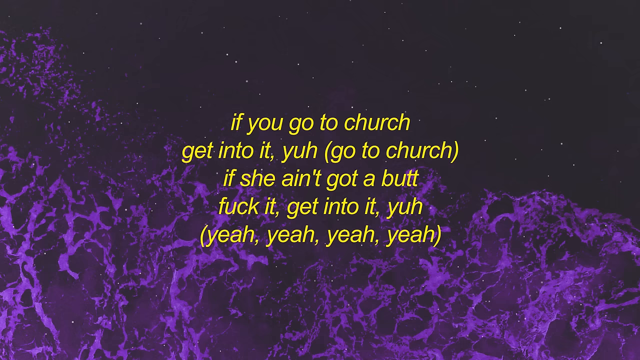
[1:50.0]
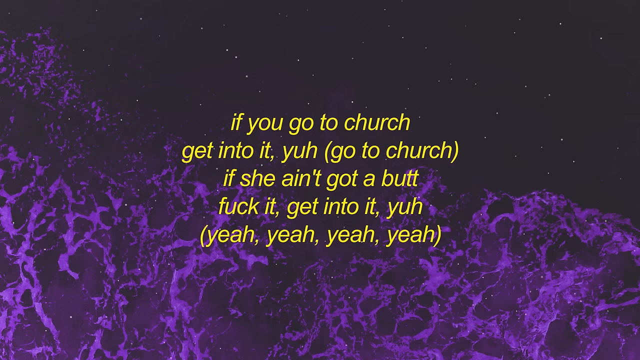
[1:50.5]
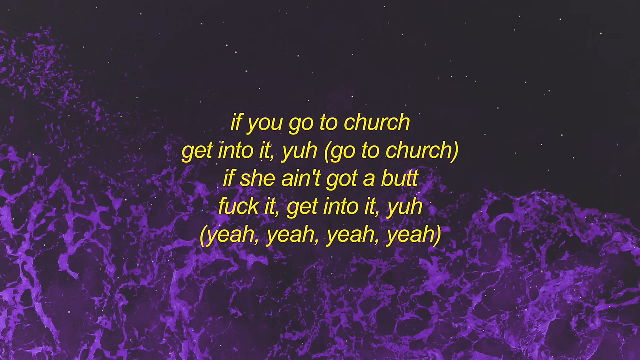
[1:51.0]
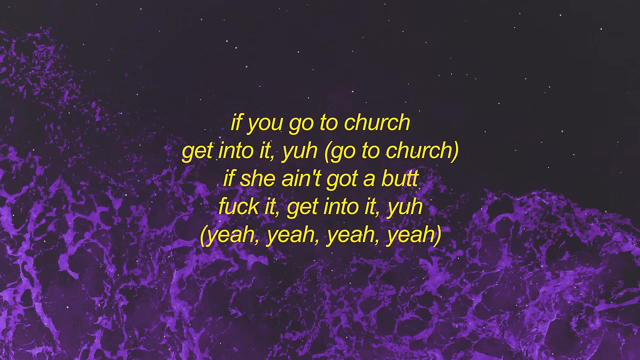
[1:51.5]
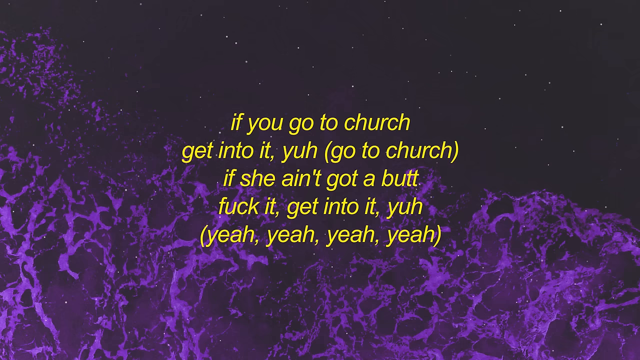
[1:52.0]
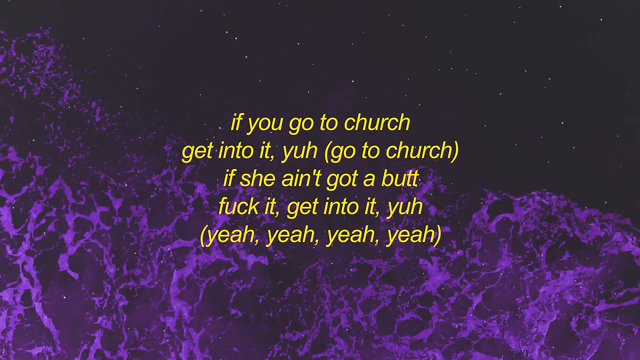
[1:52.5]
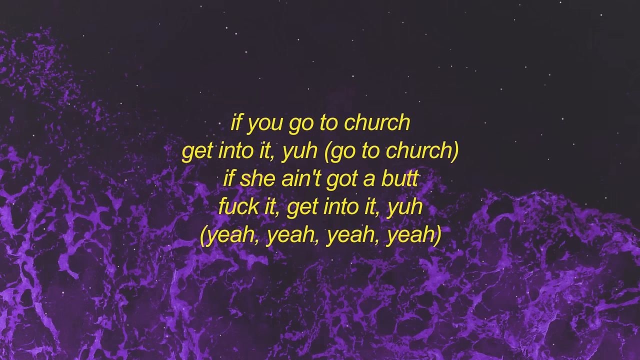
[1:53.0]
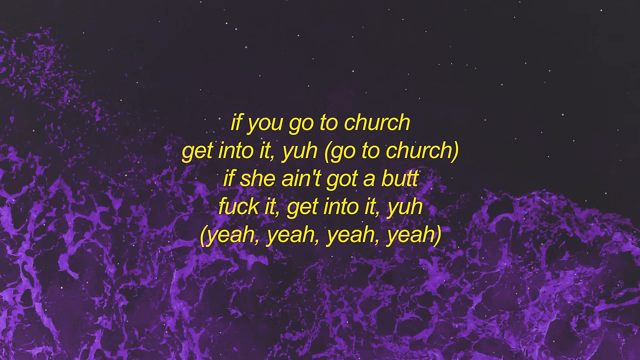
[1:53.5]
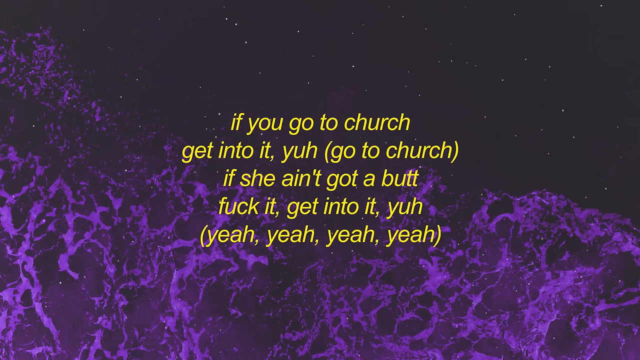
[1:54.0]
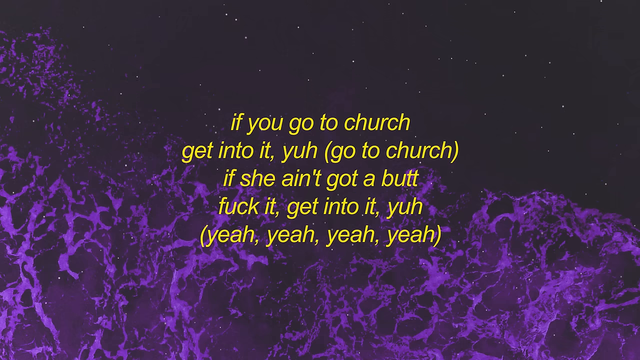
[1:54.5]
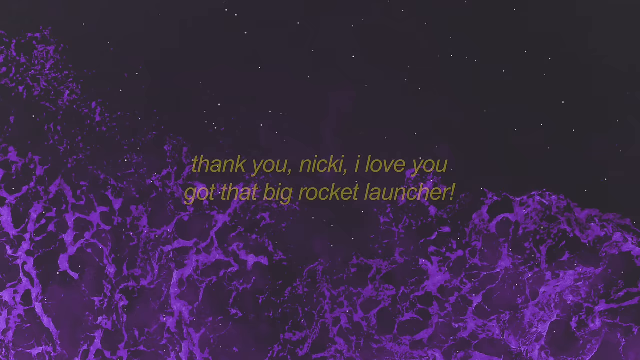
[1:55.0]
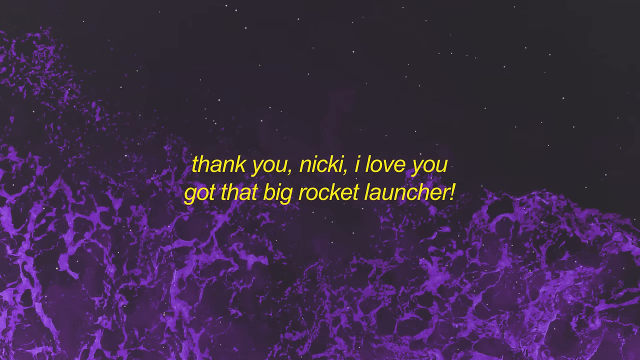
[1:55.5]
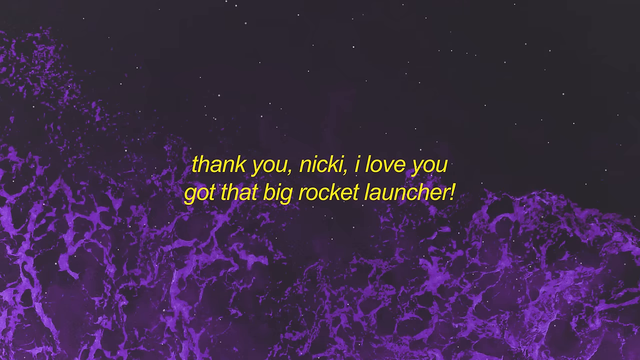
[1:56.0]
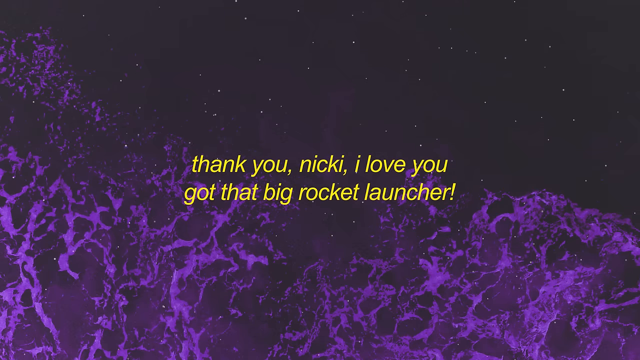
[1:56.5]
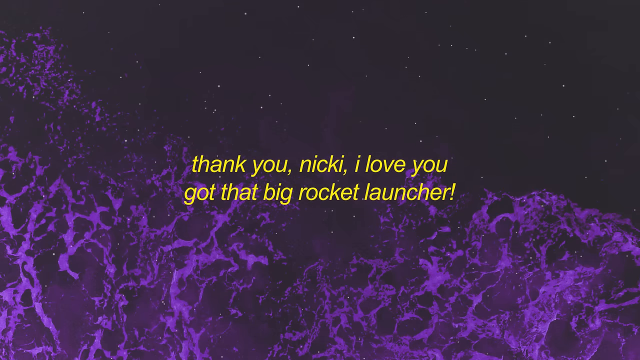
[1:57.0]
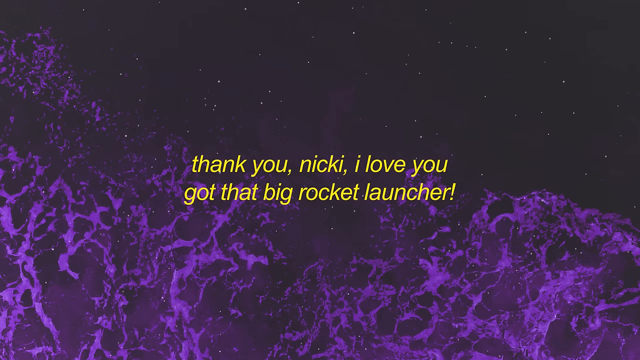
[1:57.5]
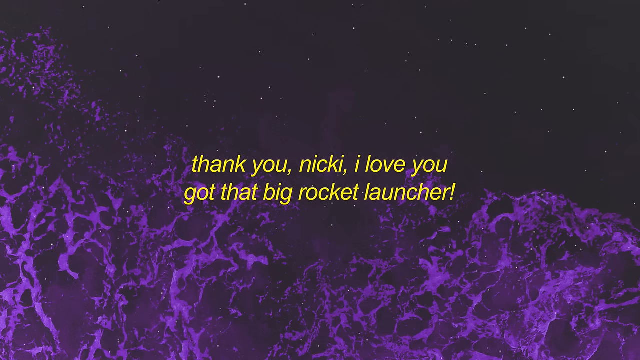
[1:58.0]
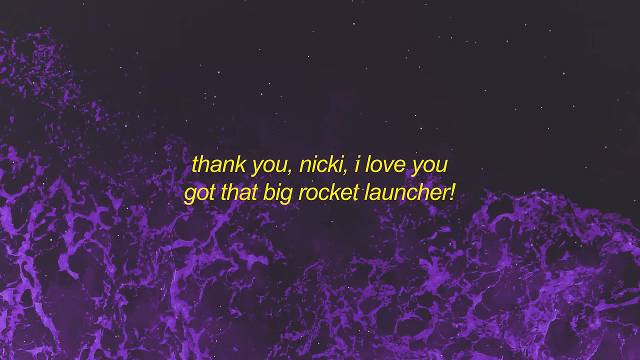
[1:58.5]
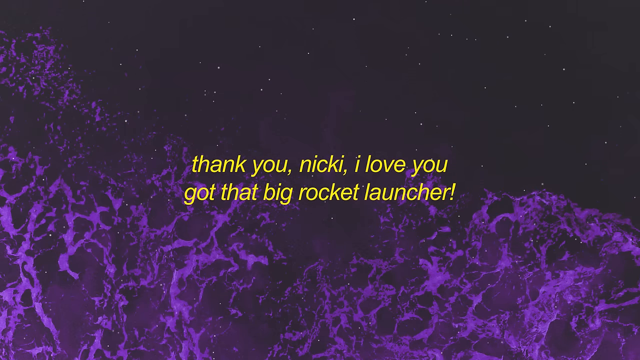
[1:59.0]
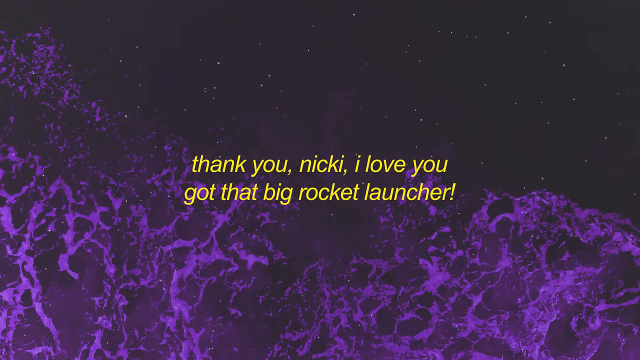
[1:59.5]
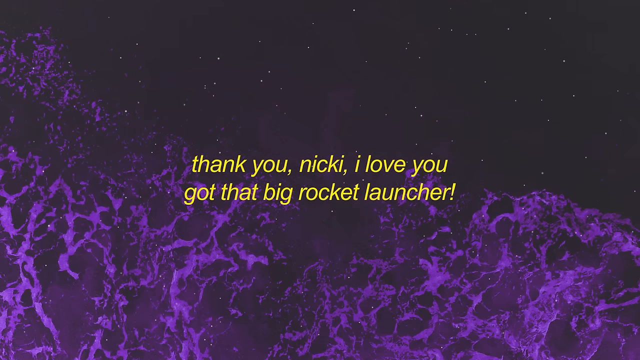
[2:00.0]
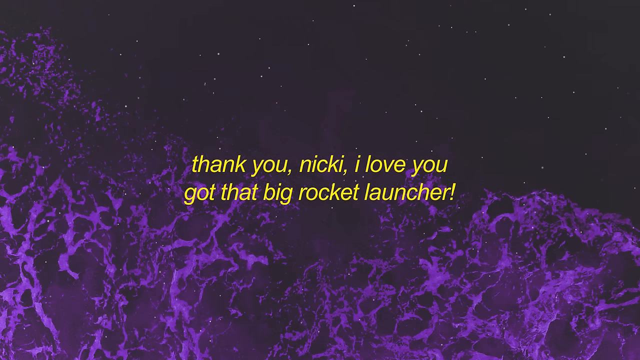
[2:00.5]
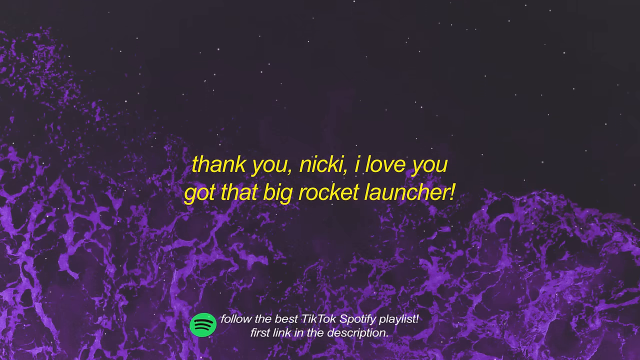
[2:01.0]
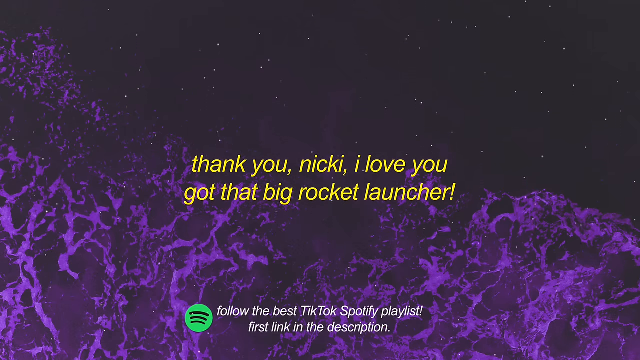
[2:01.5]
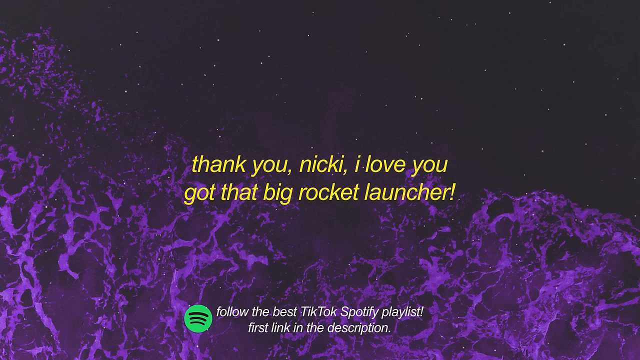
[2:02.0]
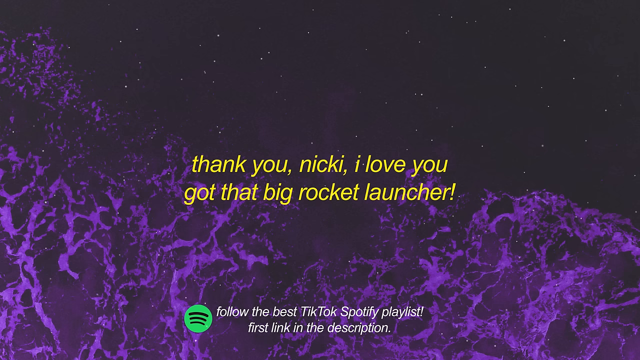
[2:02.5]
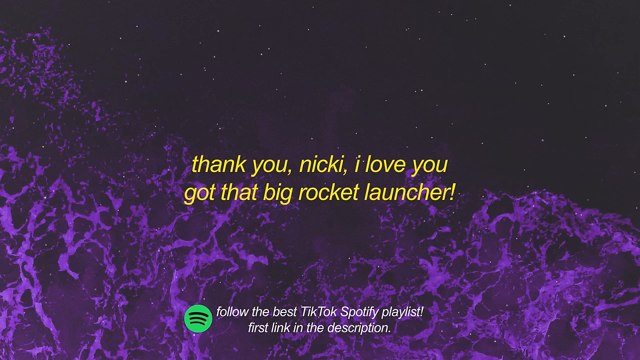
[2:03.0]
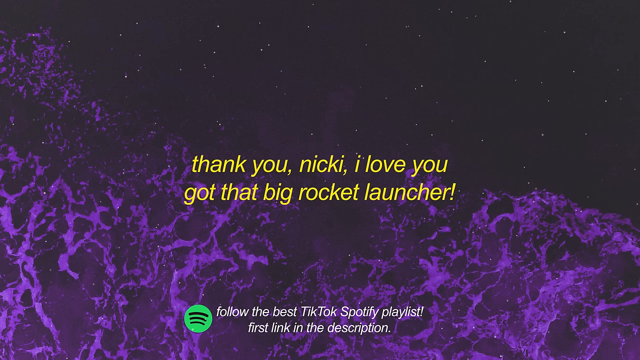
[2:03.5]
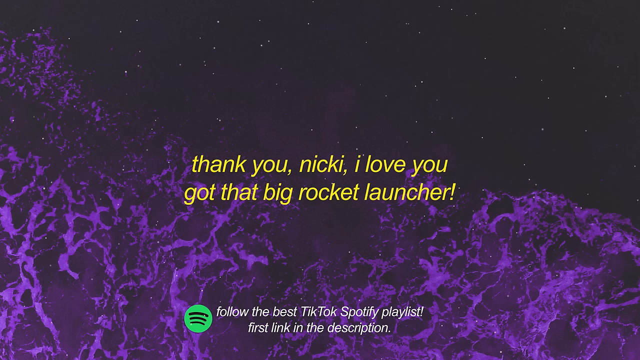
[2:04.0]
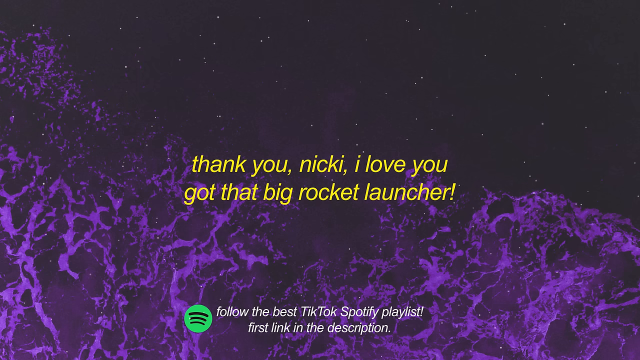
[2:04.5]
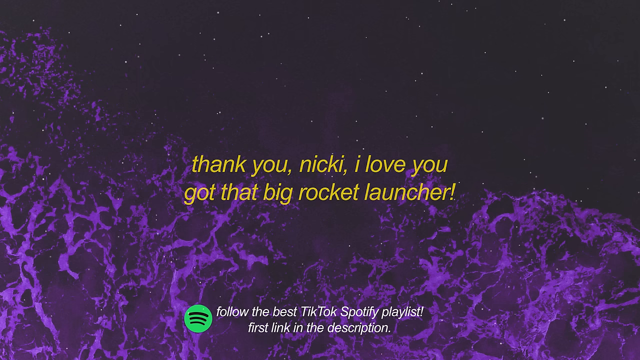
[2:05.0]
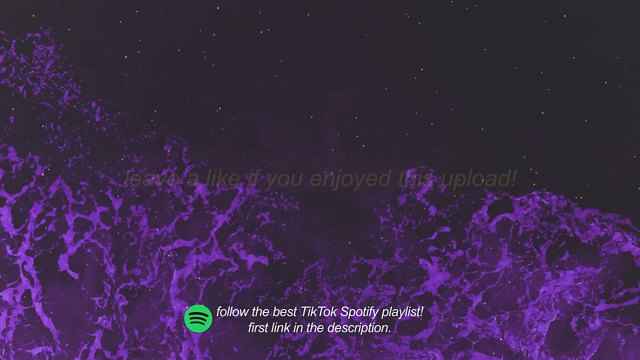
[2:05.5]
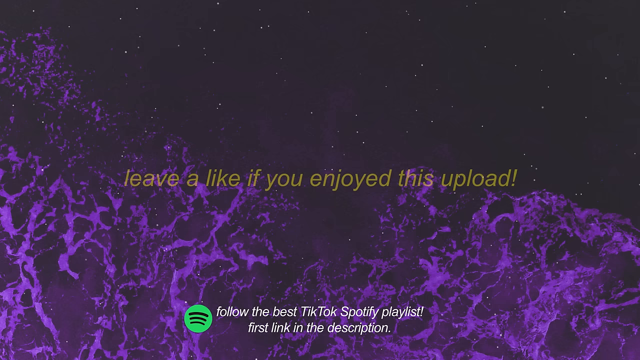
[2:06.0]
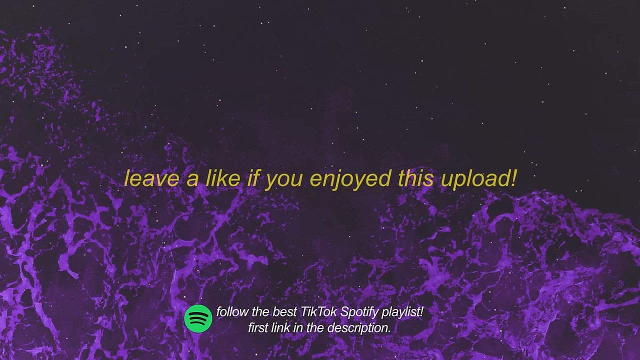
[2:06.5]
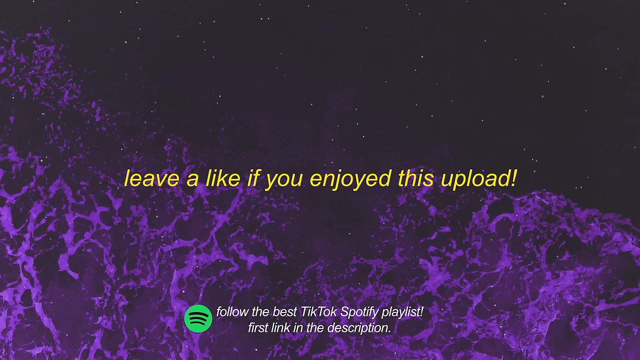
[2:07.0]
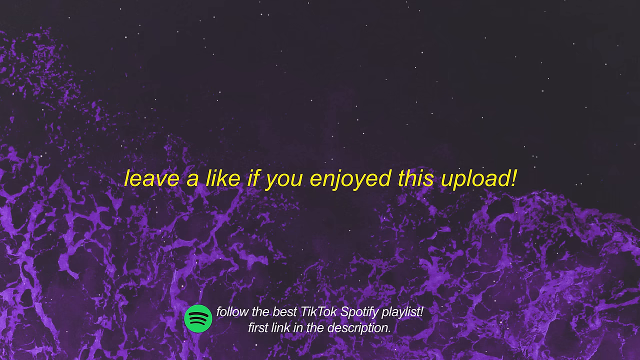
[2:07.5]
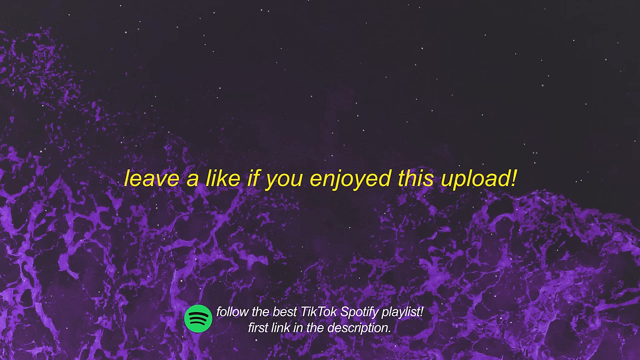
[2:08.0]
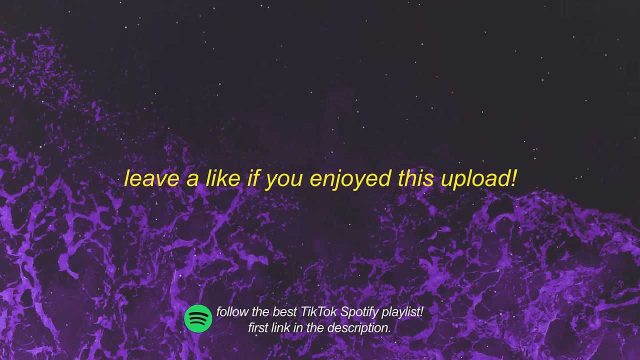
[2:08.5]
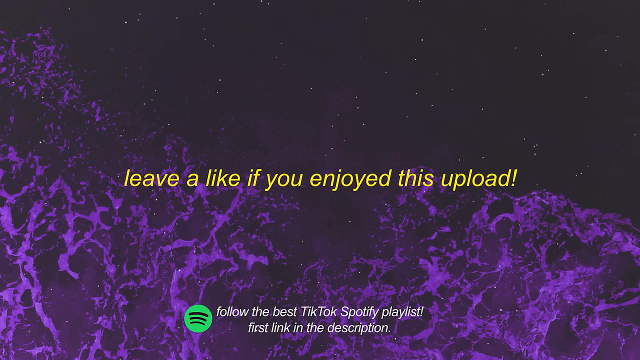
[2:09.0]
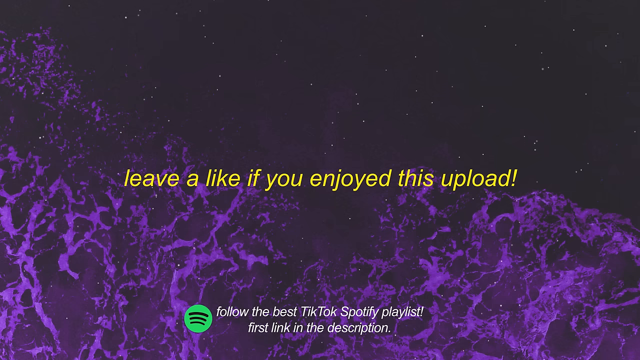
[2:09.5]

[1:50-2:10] Lyrics, probably to a rap song with a lot of quick words and rhyming, are shown in yellow font. The page reads "If you go to church get into it. Yeah go to church if she ain't got a butt fuck it get into it Yeah, yay. Yay. Yay. Yay." The next page reads "Thank you. Nikki. I love you got that big rocket launcher." Text then seems to refer to the best tiktok spotify playlist and tells viewers to "leave a like if you enjoyed this upload." All the words are in lowercase yellow font.